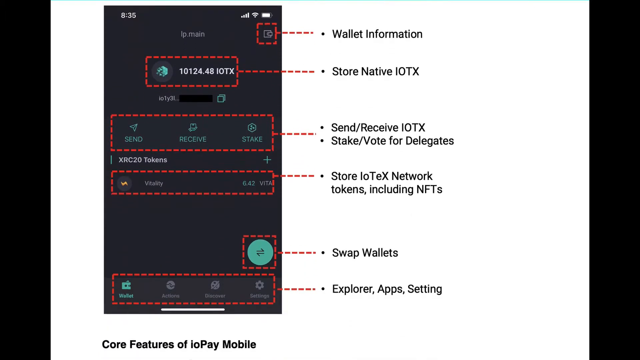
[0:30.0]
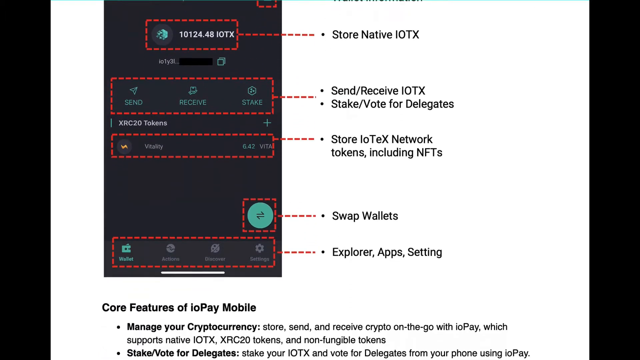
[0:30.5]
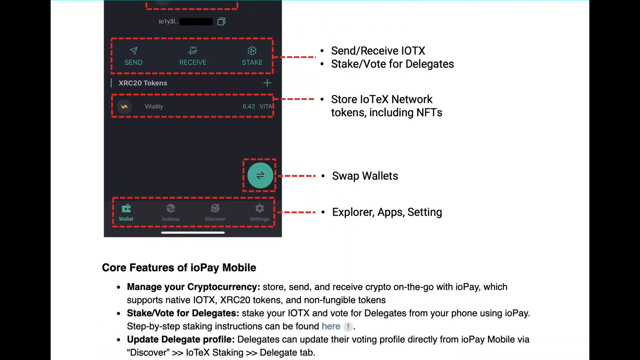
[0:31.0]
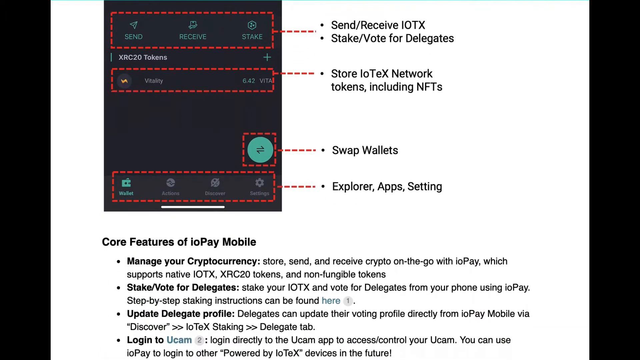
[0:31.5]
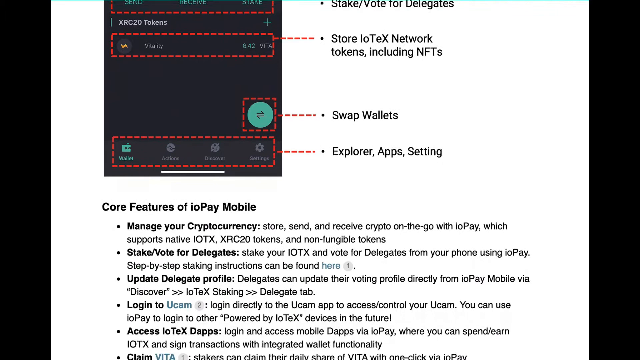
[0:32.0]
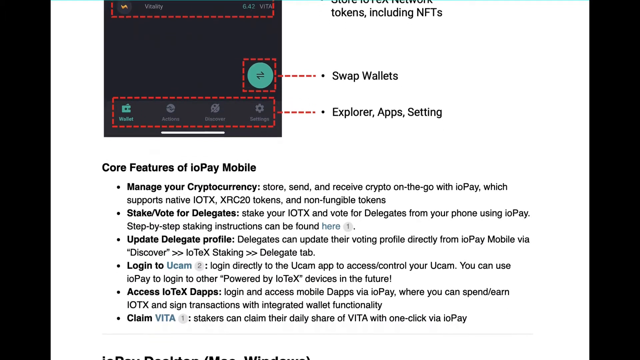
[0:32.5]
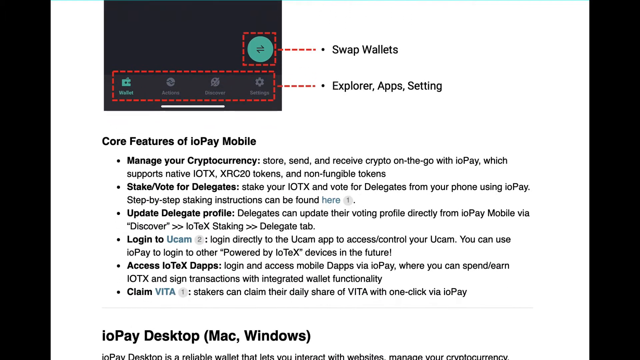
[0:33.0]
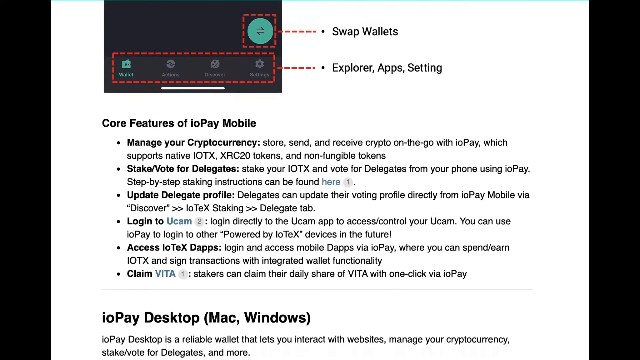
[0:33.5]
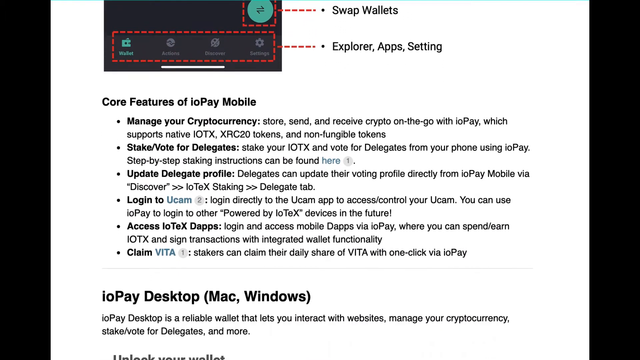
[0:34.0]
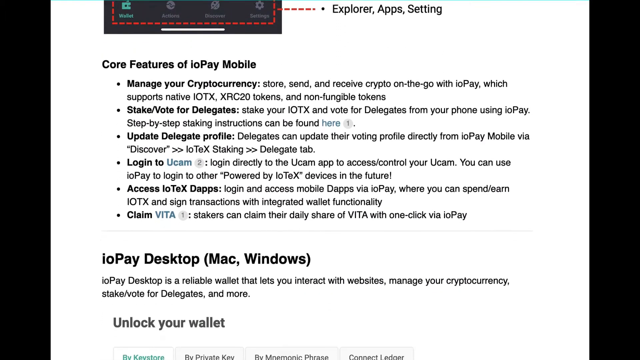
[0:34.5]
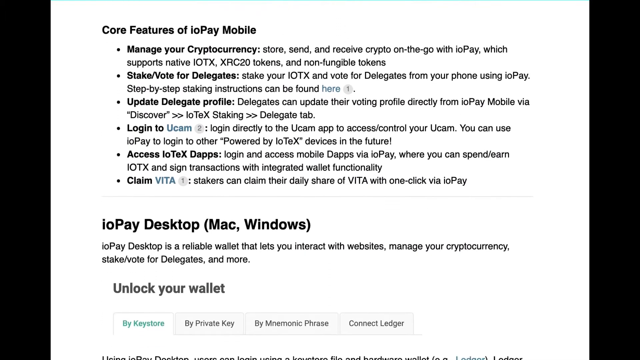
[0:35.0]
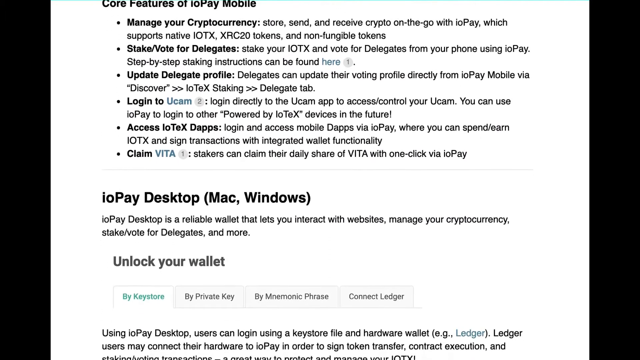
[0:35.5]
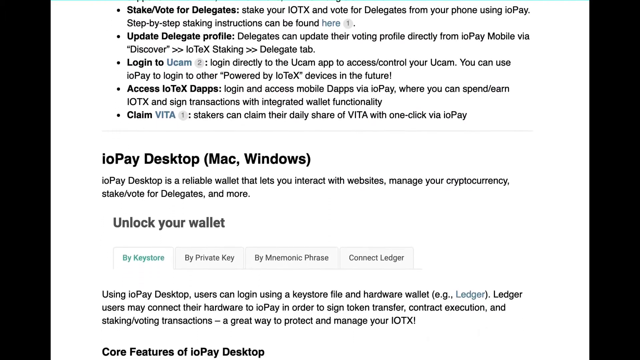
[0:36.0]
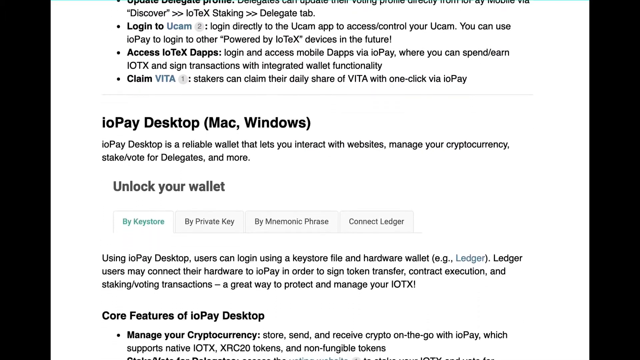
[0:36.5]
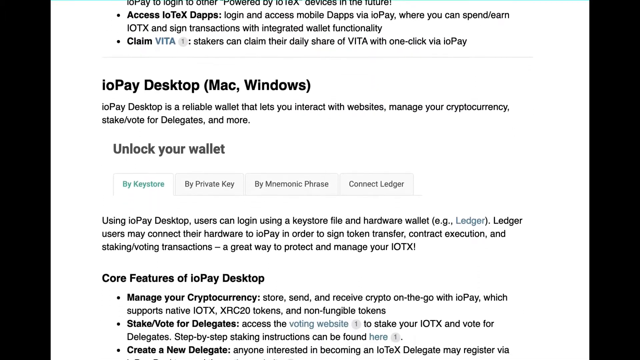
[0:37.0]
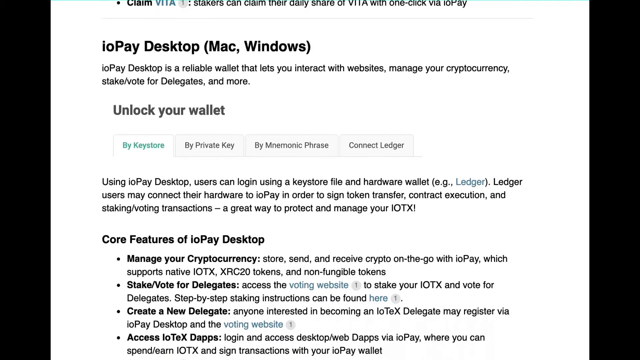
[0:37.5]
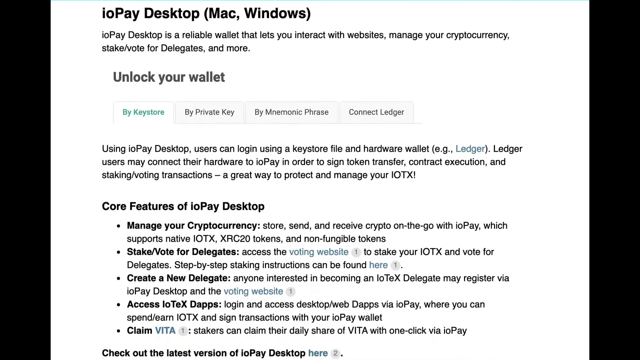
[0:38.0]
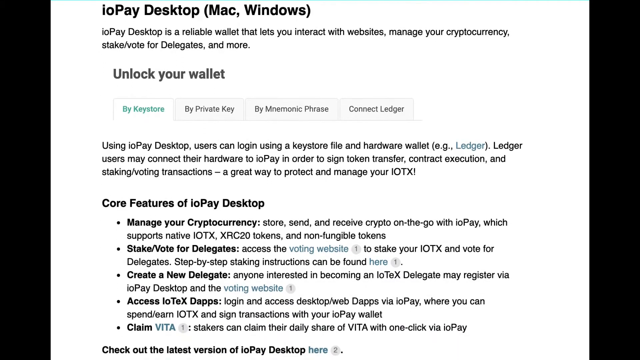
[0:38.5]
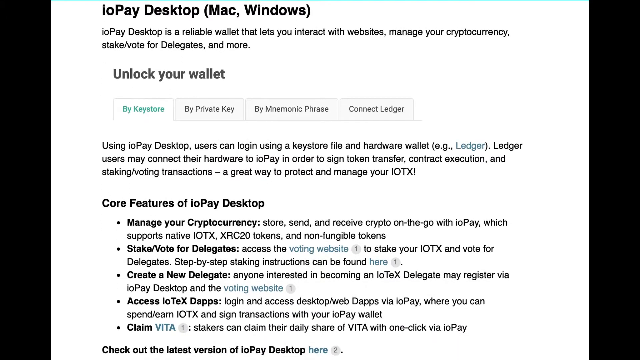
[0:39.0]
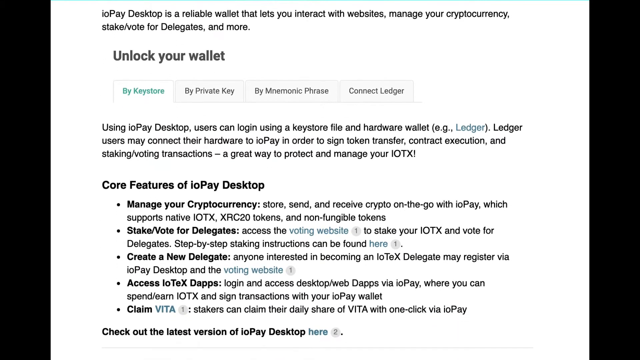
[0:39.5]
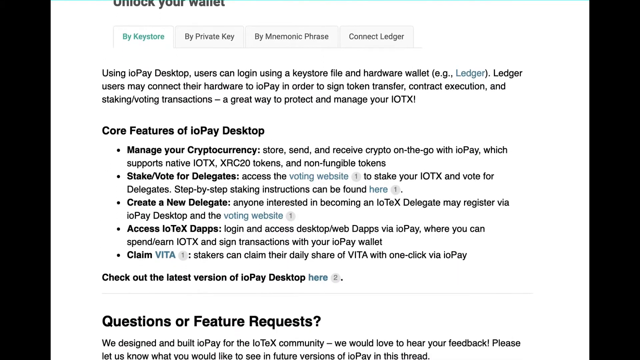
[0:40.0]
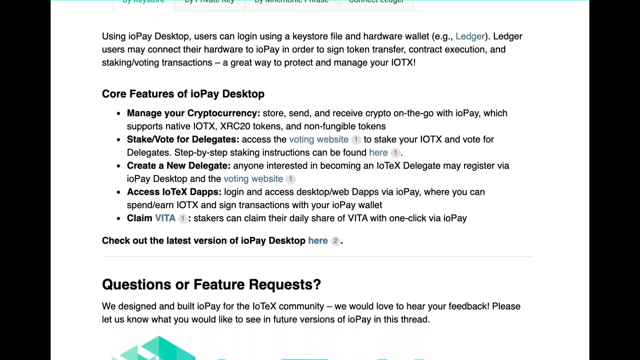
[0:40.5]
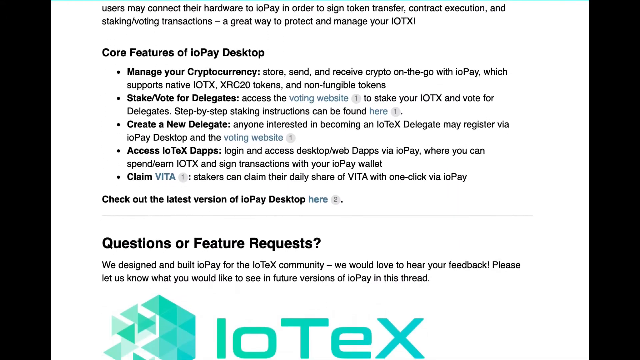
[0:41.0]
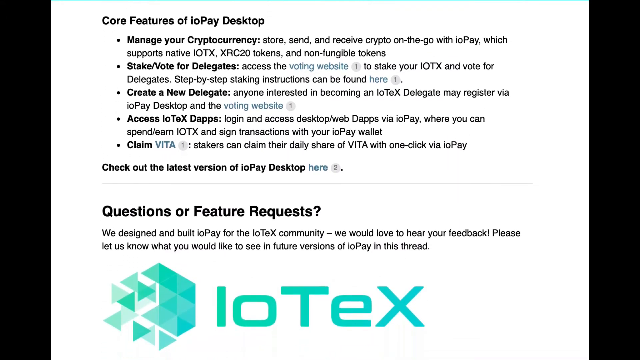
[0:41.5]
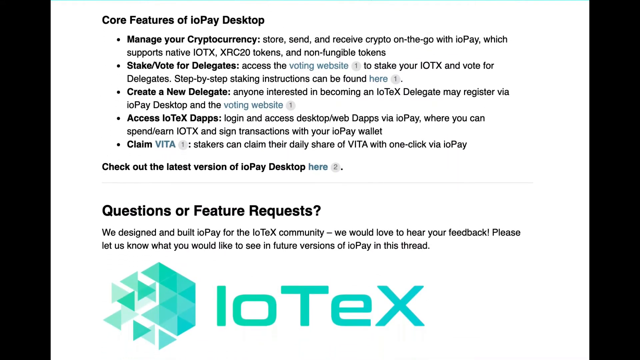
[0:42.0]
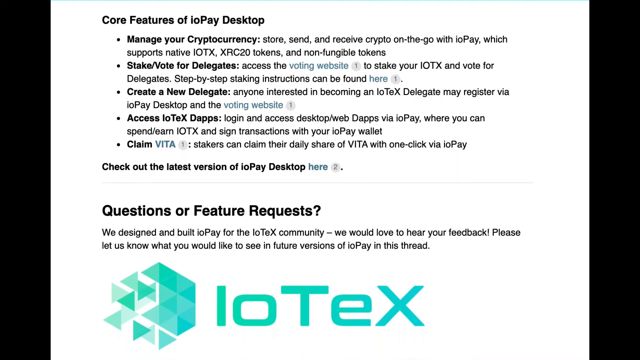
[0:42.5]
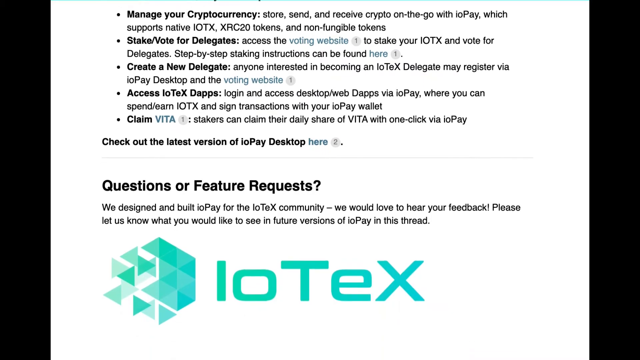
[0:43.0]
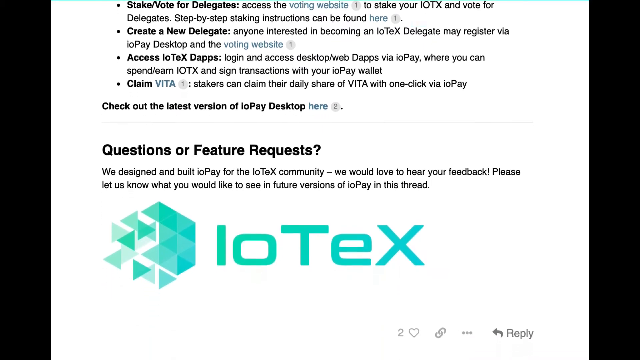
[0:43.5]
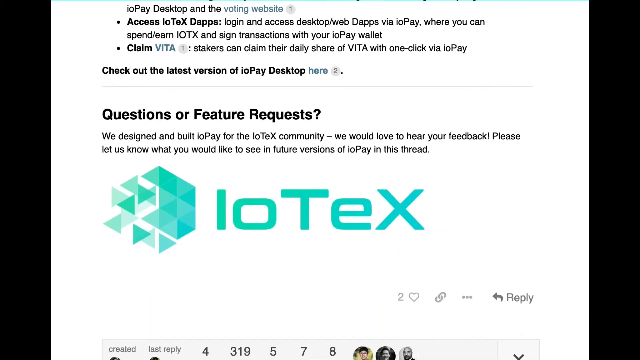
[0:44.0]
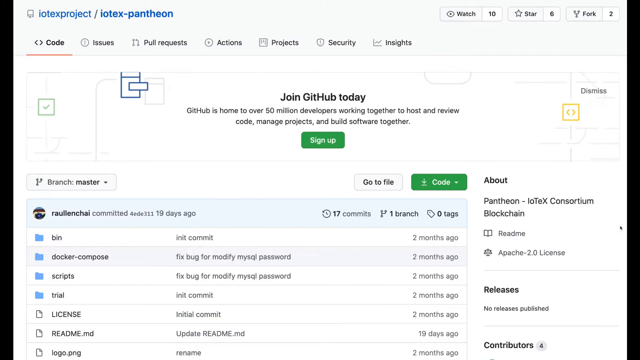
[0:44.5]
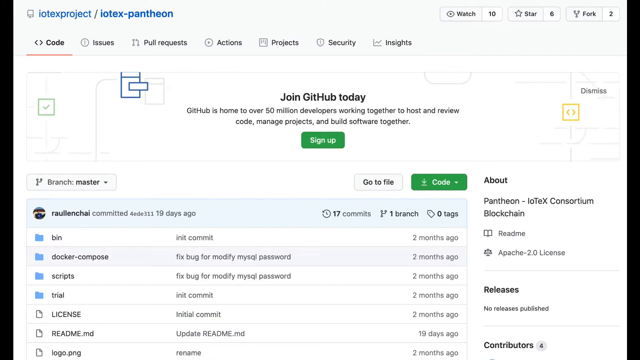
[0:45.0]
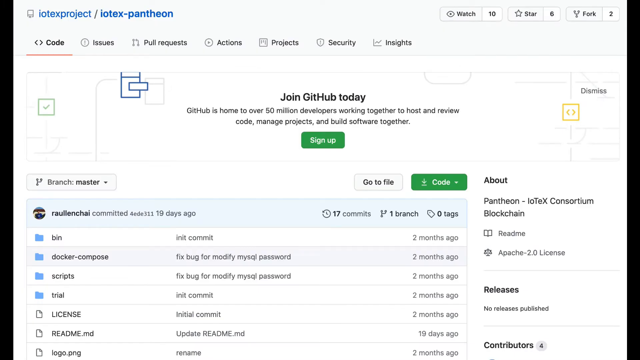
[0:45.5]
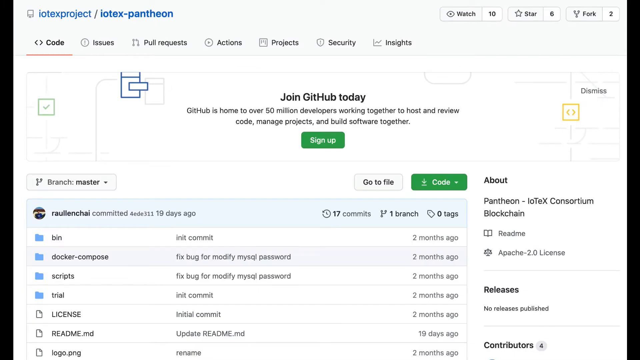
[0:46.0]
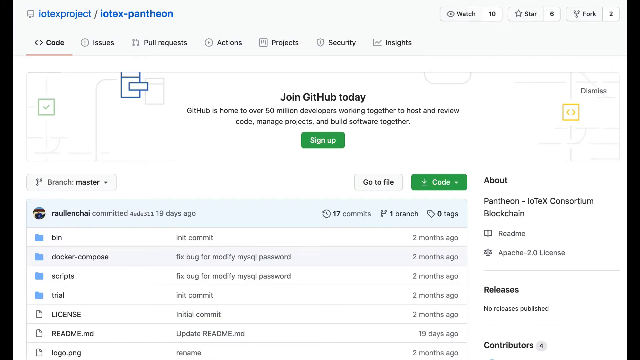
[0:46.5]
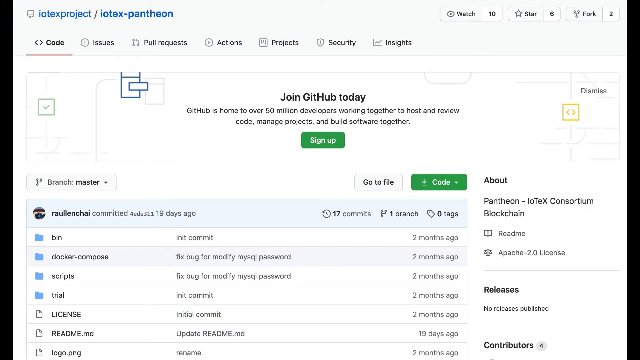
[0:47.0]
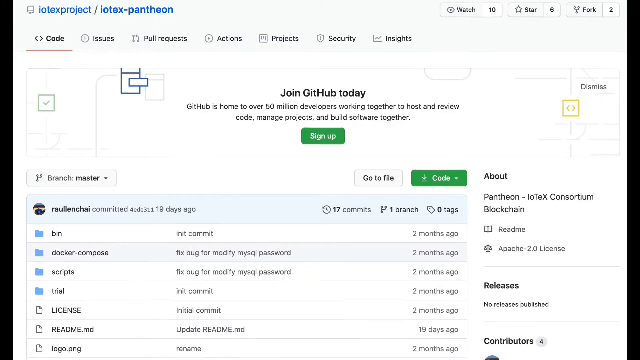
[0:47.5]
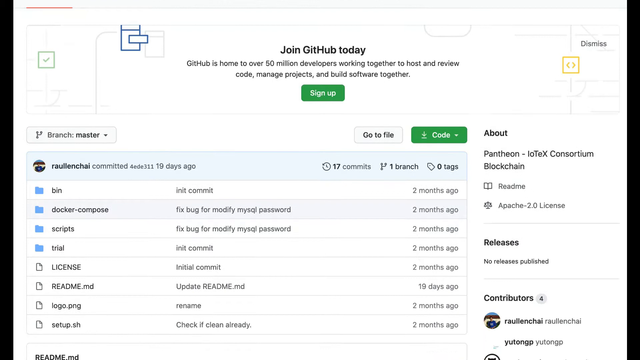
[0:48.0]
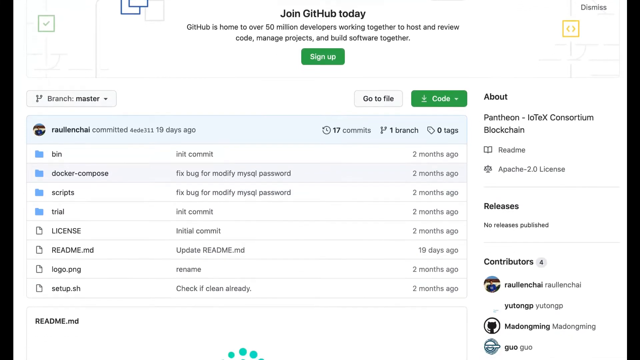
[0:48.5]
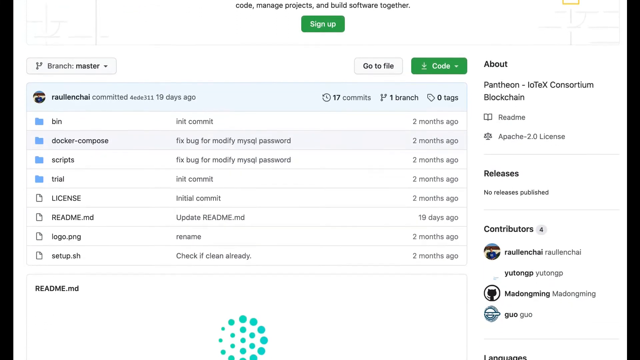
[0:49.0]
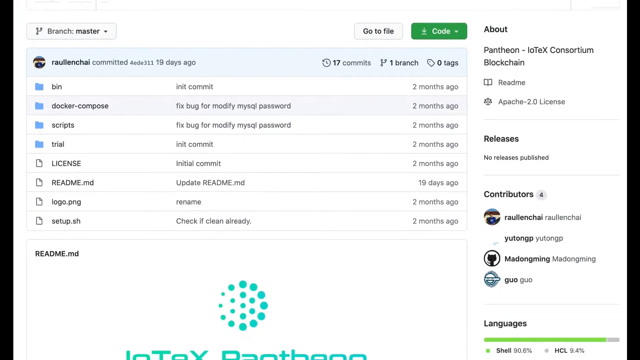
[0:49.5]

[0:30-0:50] The screen scrolls through the post, showing a diagram of the app with a kind of legend to the side. Each part of the mobile screenshot is marked in a kind of dotted red and points to a bullet point describing what that part shows. The post moves into the core features section, and the screen keeps scrolling down to text about IOC desktop, then a heading that mentions four features of IOC desktop with five bullet points below it listing core features. The page then appears to reach its end, where it says "questions or feature requests", followed by a big logo. The video then flips to what looks like a GitHub repository, which also scrolls down slowly. Some files are visible, and on the right an about section calls it the "pantheon-blockchain".